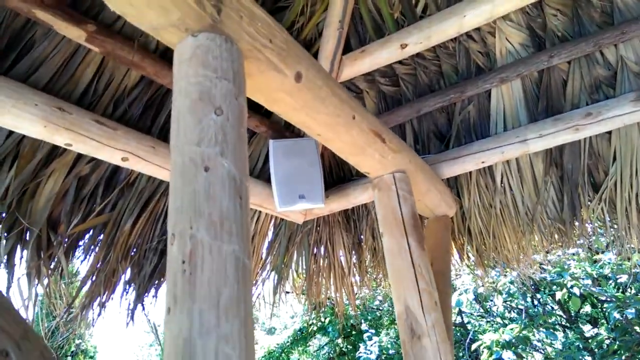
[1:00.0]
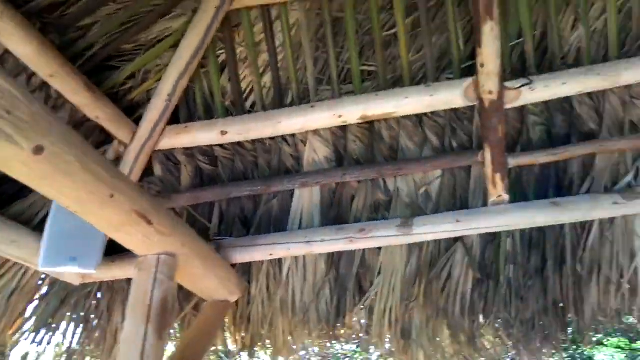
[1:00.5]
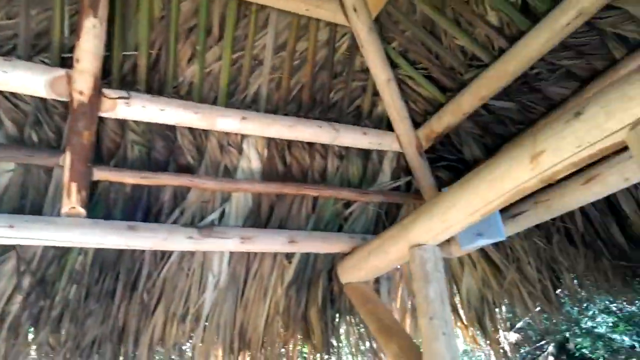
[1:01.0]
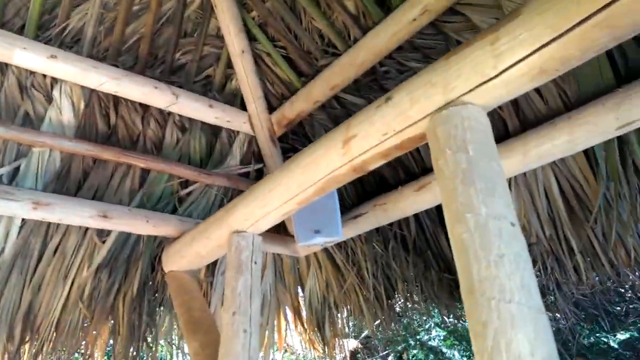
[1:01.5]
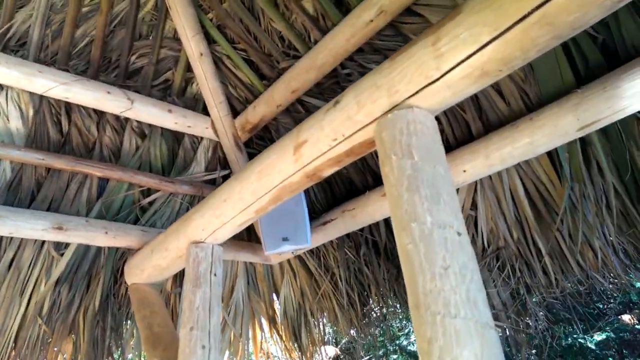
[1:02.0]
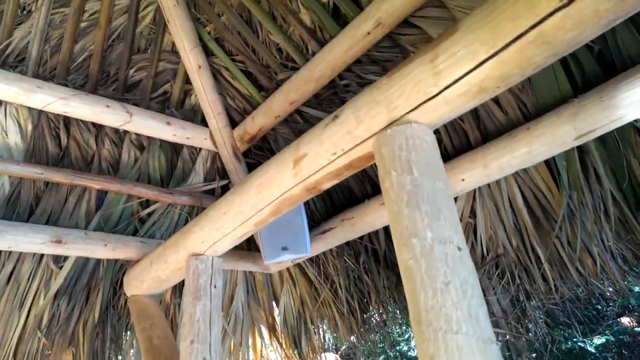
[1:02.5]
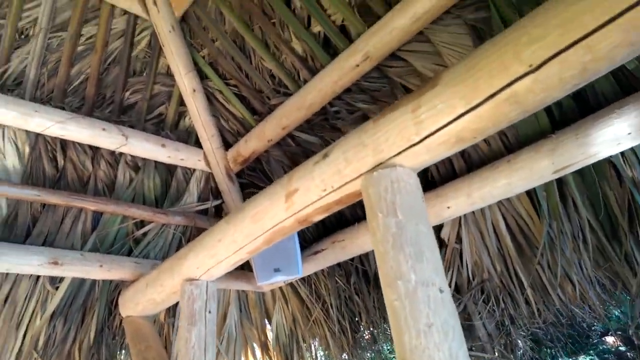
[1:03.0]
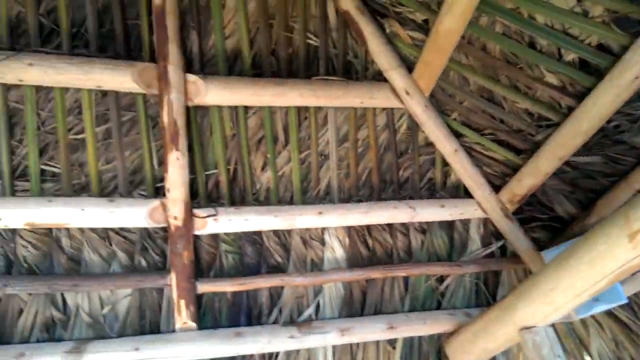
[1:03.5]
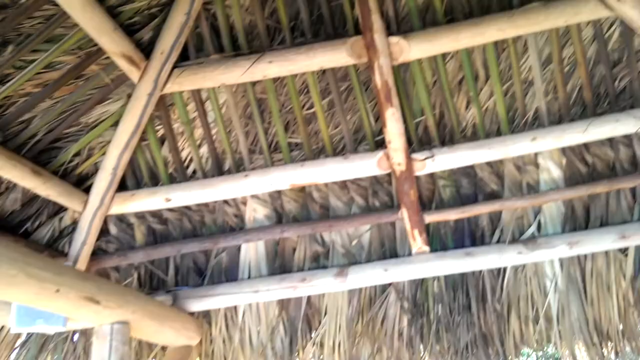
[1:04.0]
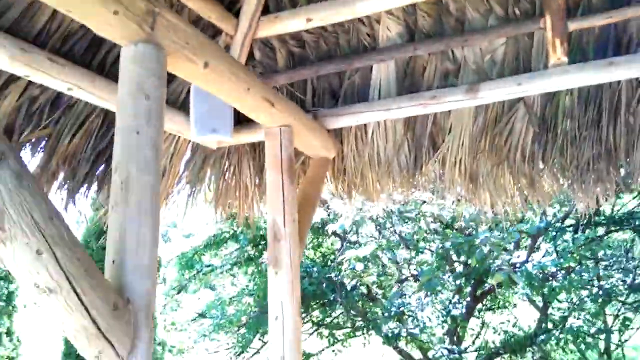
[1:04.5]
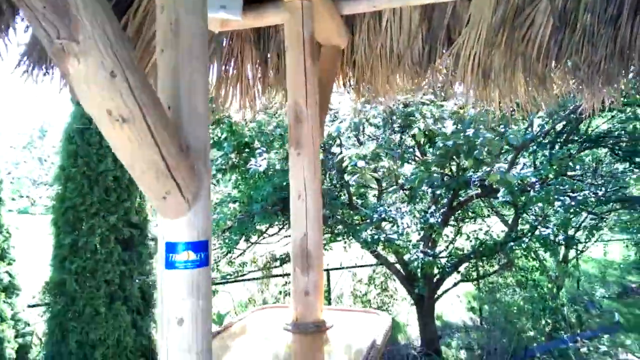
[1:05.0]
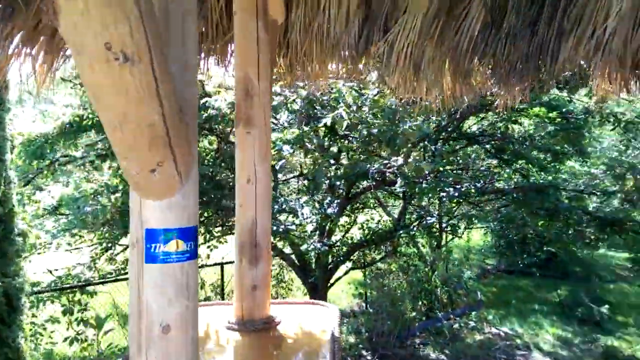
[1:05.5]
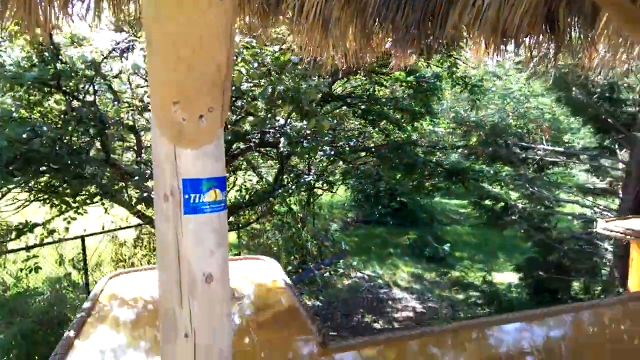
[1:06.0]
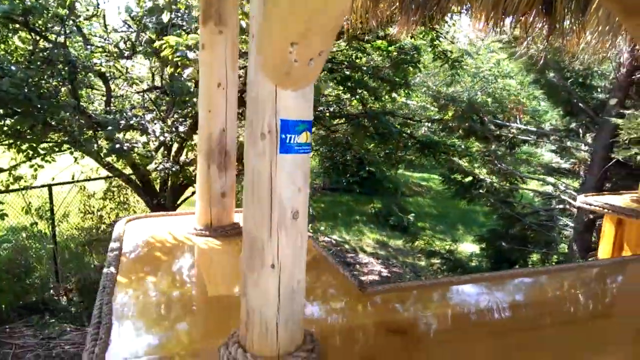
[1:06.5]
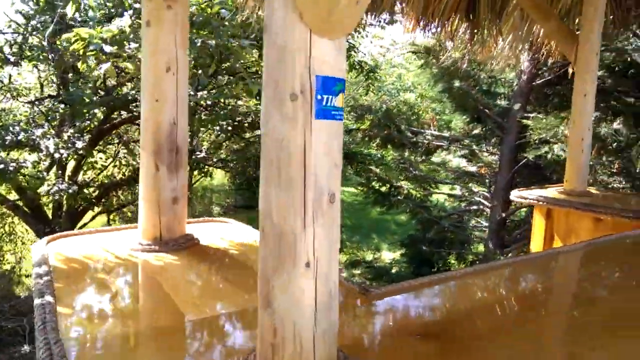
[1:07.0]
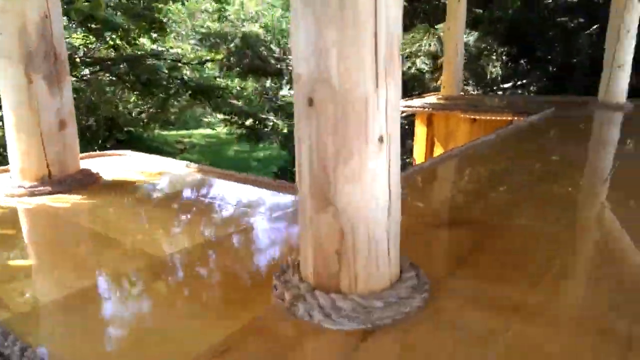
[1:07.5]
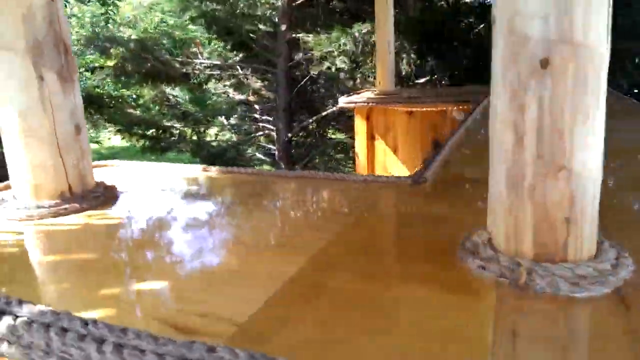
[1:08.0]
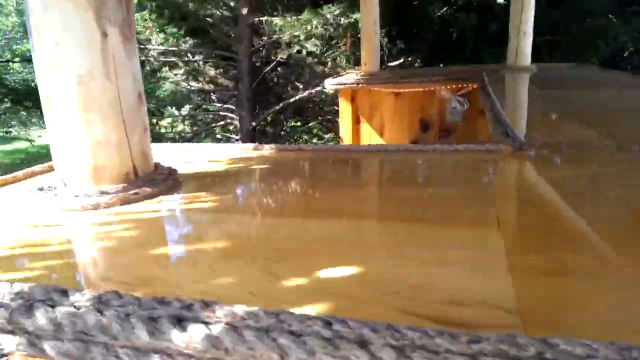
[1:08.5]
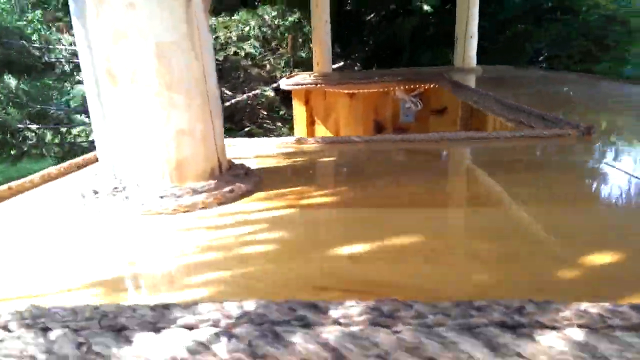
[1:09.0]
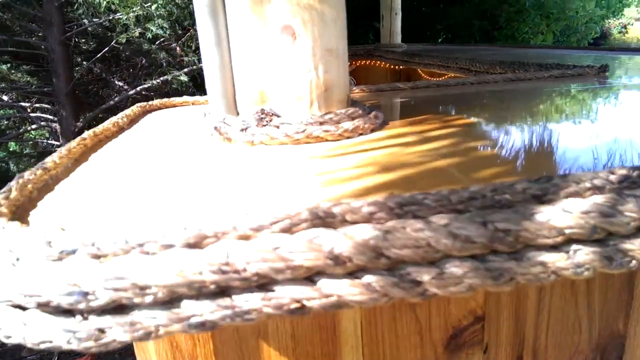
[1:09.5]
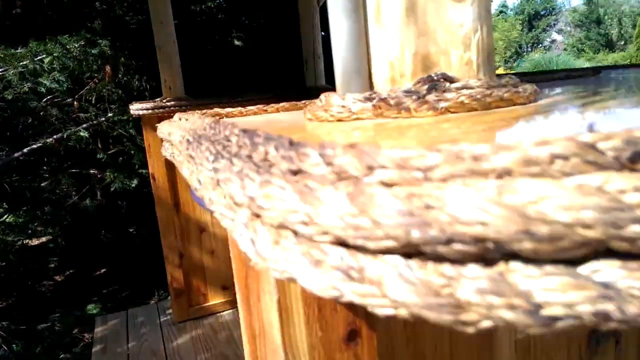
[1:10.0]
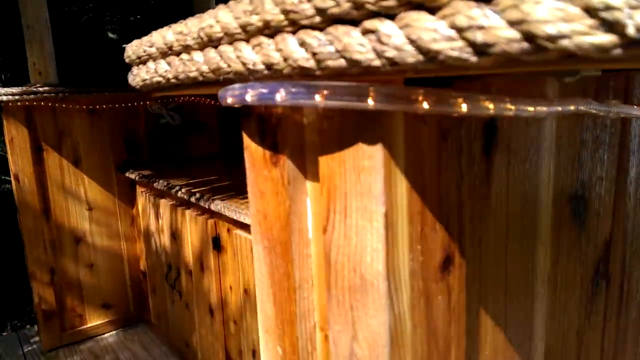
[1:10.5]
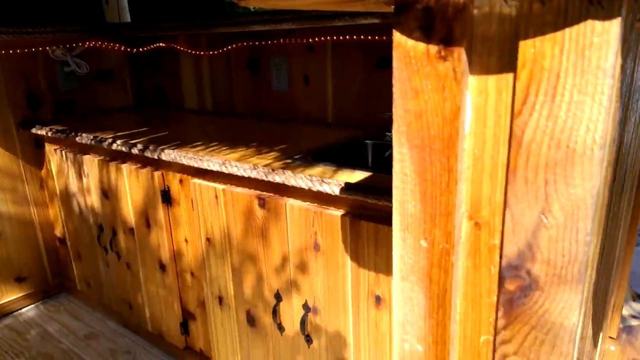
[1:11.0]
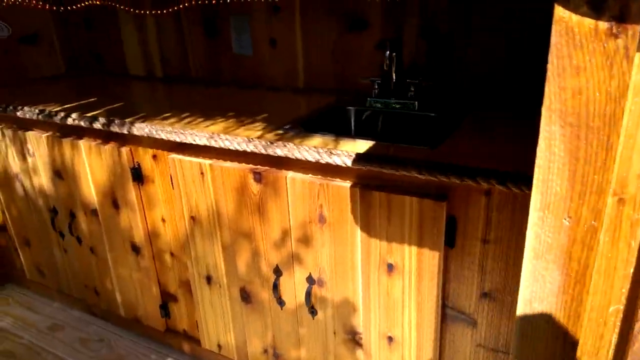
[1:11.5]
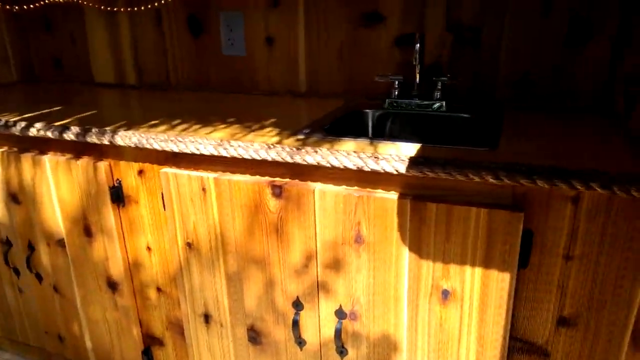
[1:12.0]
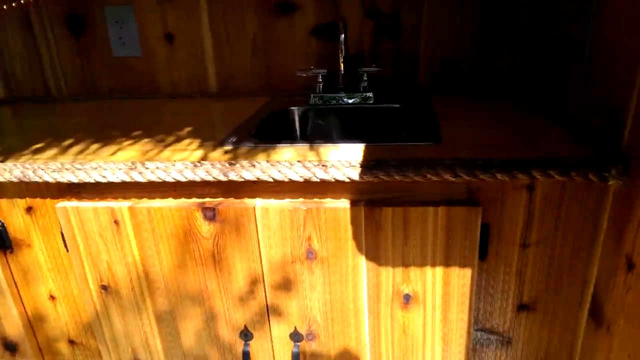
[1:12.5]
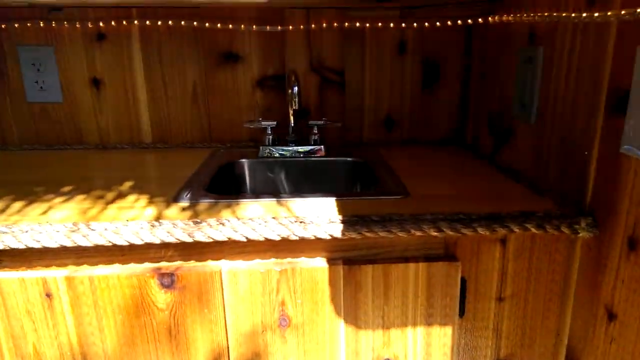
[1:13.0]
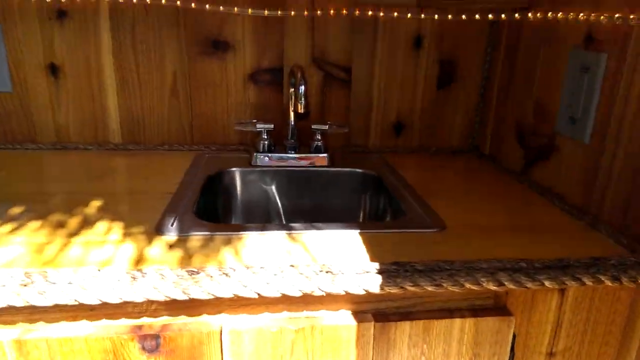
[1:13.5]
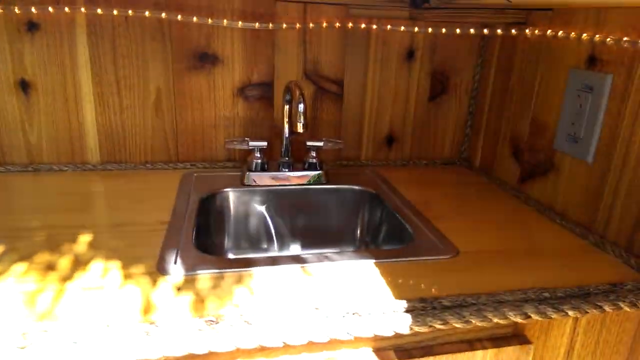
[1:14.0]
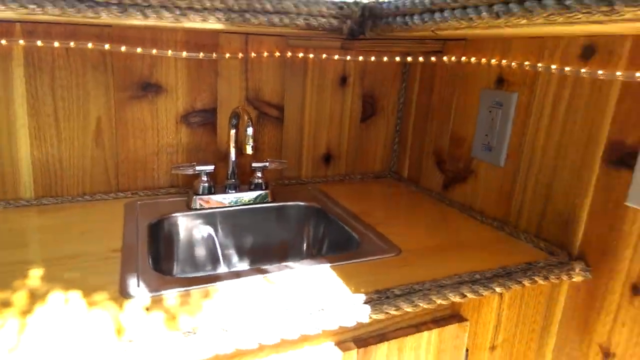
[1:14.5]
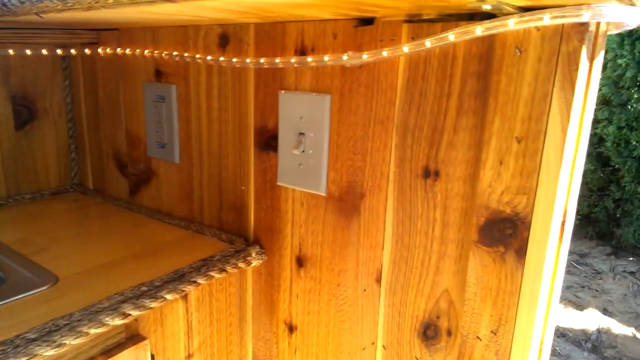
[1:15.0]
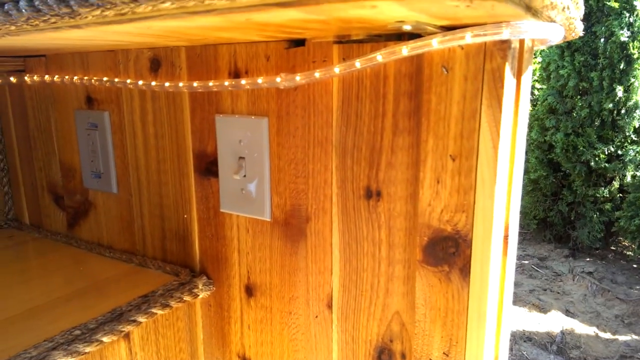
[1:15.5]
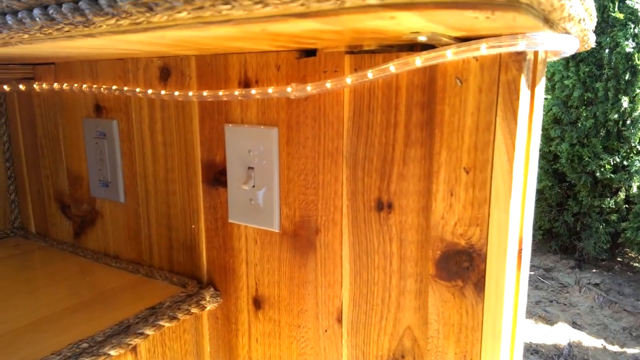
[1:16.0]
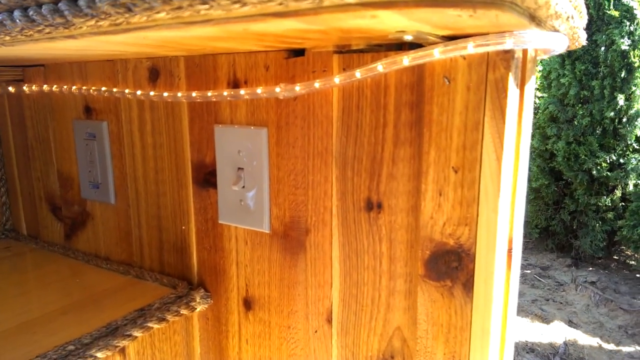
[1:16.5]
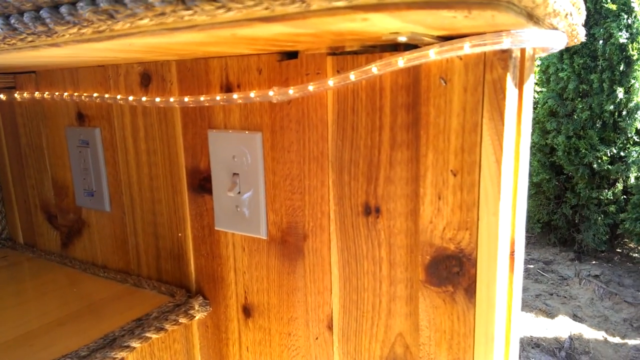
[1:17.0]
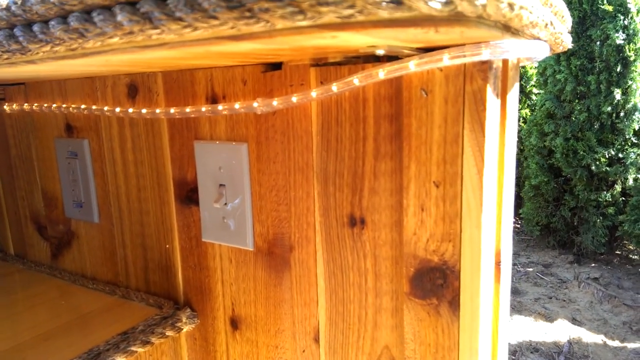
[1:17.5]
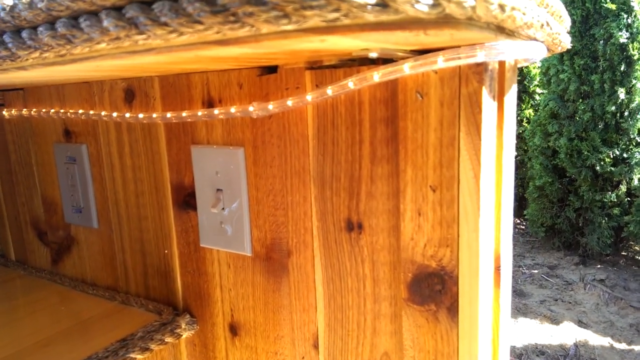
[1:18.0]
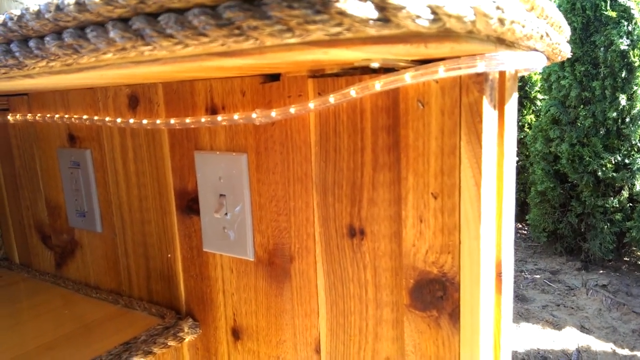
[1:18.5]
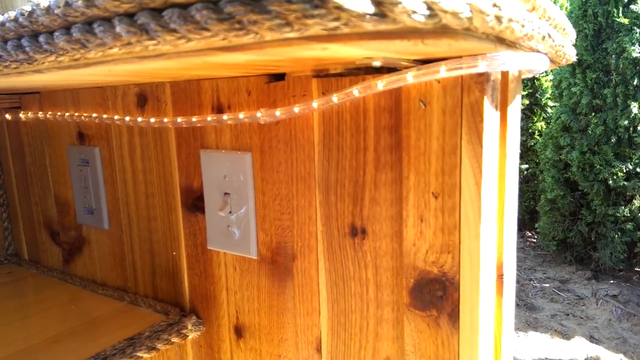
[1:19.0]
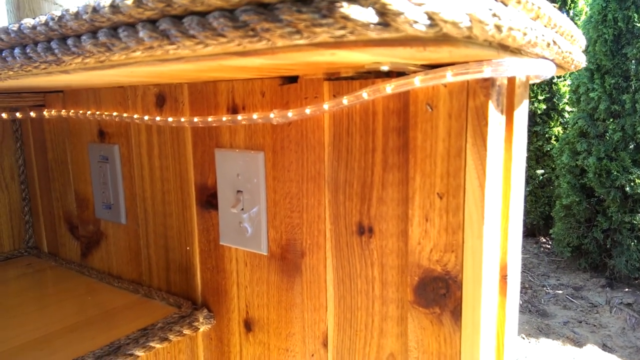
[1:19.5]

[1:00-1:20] The inside of a thatched roof is shown, looking up at a corner of the roof structure with the bamboo beams used to construct it and the thatched green grass. The camera pans rapidly to the right to another corner of the roof structure, showing the beams that hold it up, then pans downward to the countertop of the structure. A close-up shows the counter, a polished material that looks like Formica or some other synthetic material, with braided fiber trimming all around the sides of the bar. Behind the bar are a shining metal sink and faucets, as well as light switches on the inside of the bar. The inside is also made of wood.